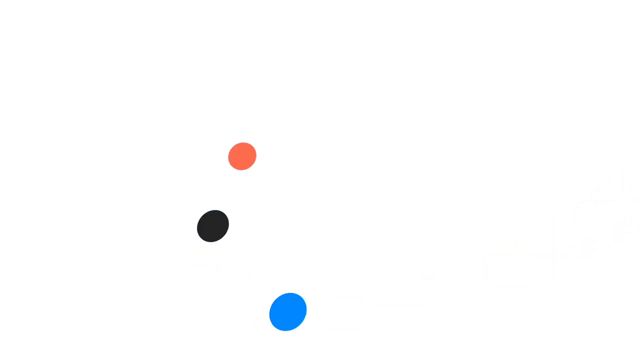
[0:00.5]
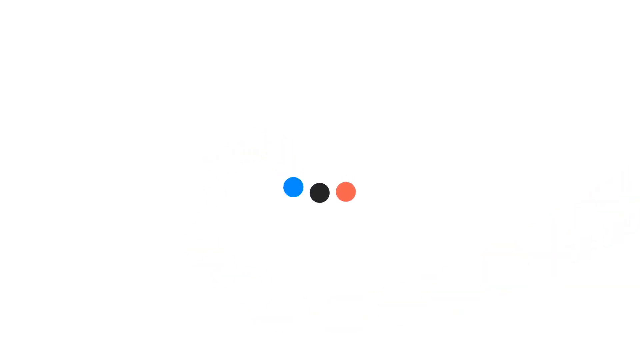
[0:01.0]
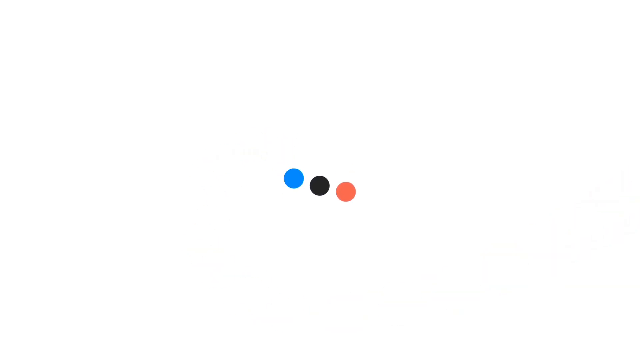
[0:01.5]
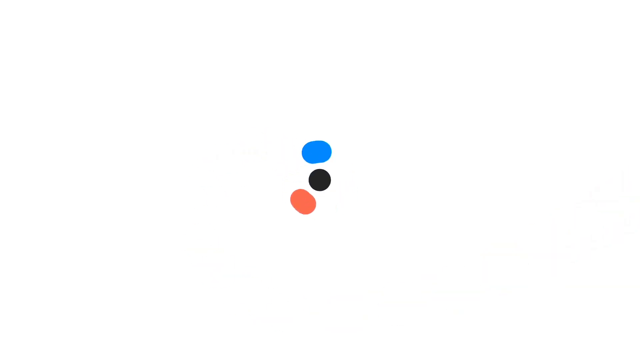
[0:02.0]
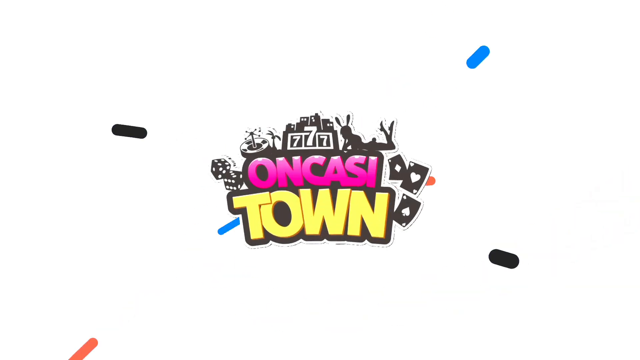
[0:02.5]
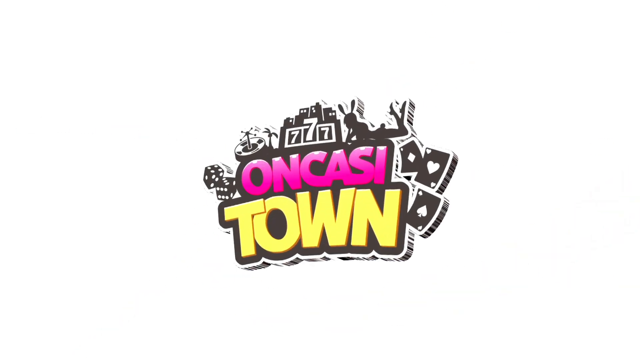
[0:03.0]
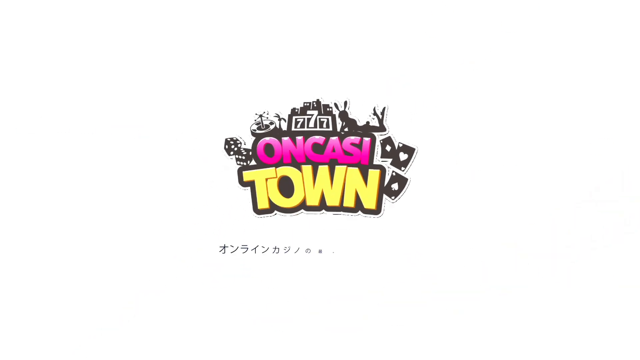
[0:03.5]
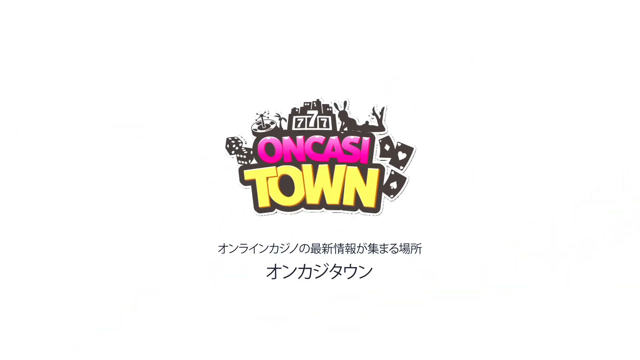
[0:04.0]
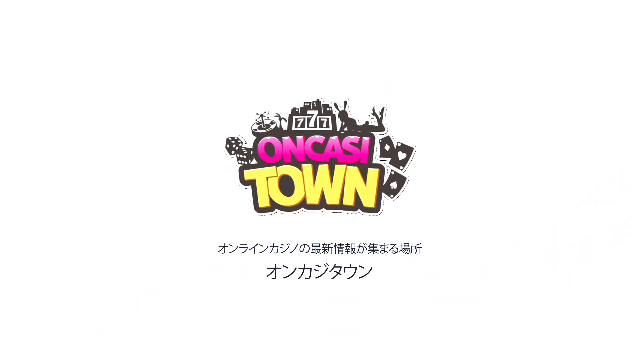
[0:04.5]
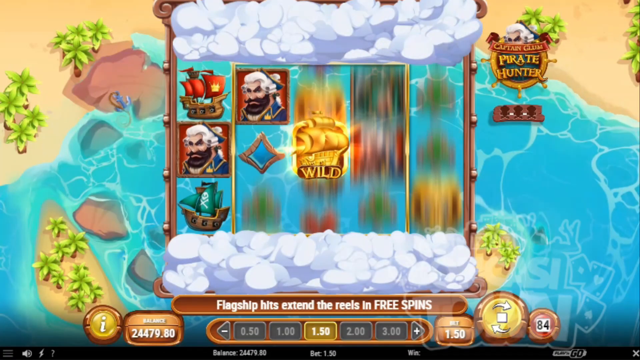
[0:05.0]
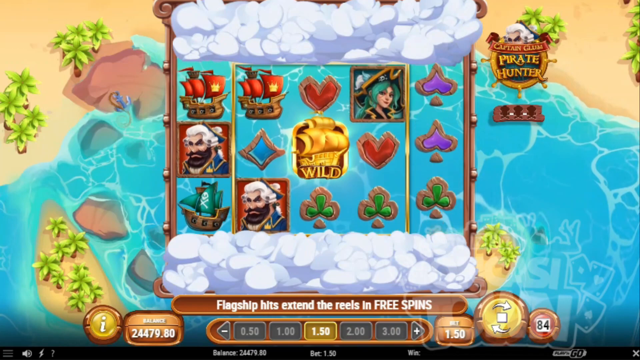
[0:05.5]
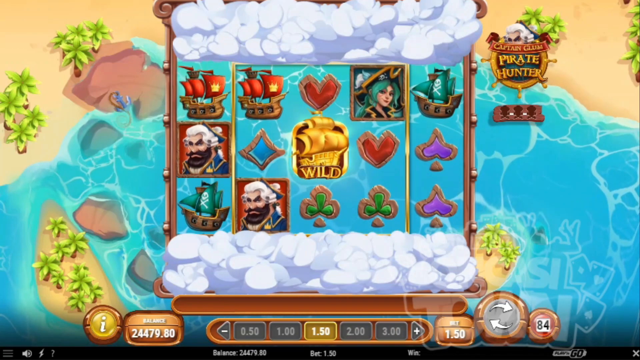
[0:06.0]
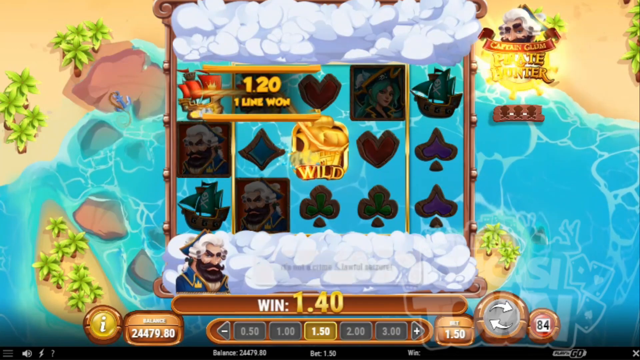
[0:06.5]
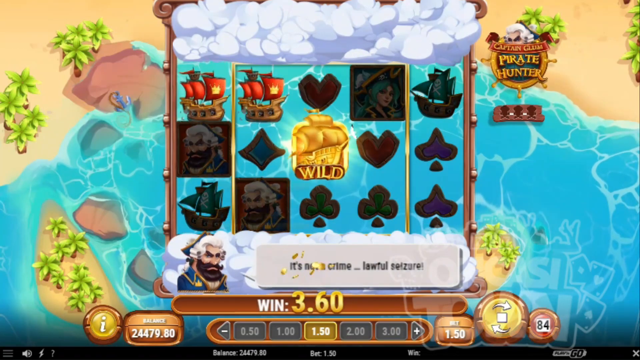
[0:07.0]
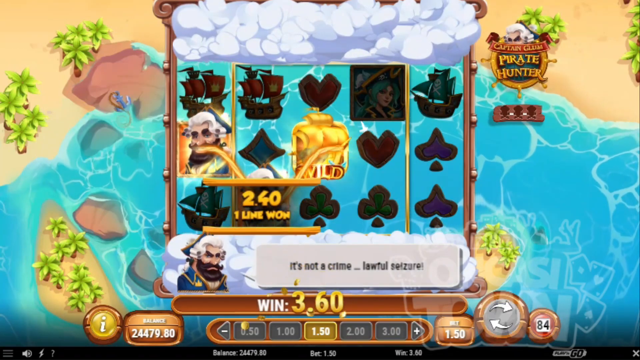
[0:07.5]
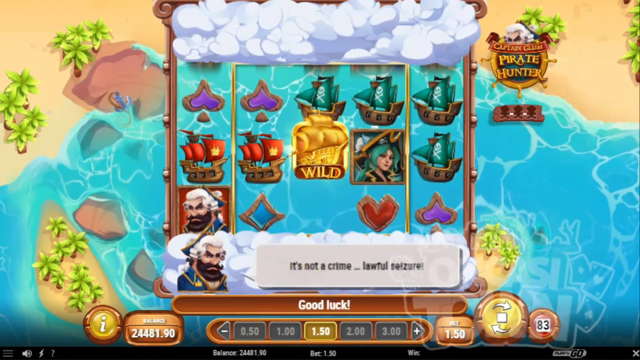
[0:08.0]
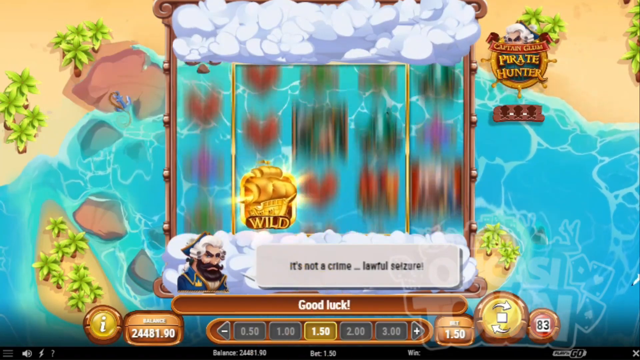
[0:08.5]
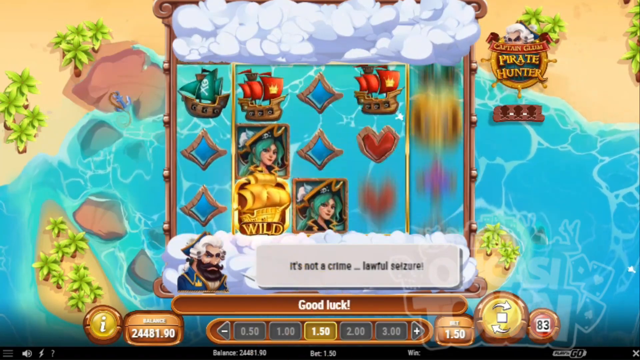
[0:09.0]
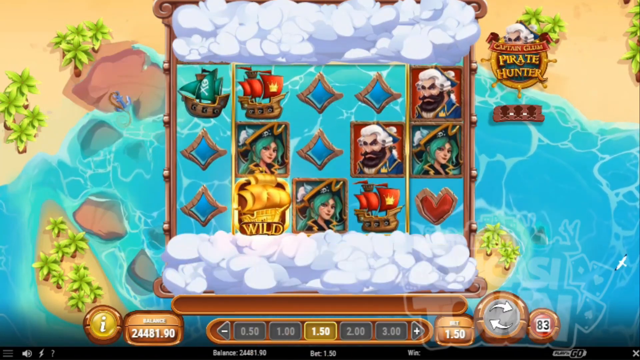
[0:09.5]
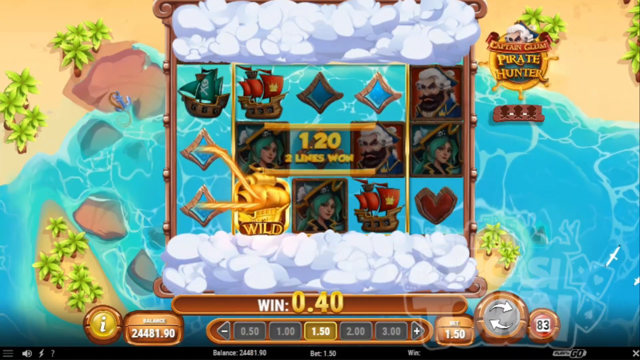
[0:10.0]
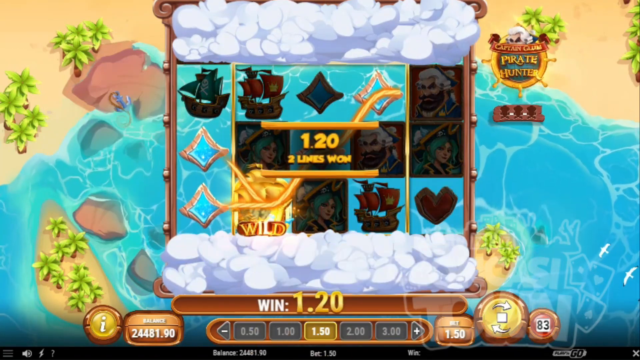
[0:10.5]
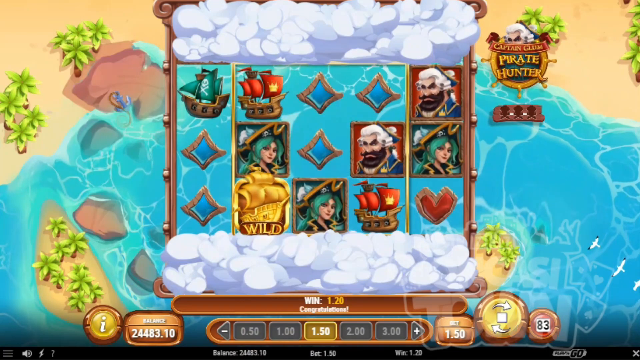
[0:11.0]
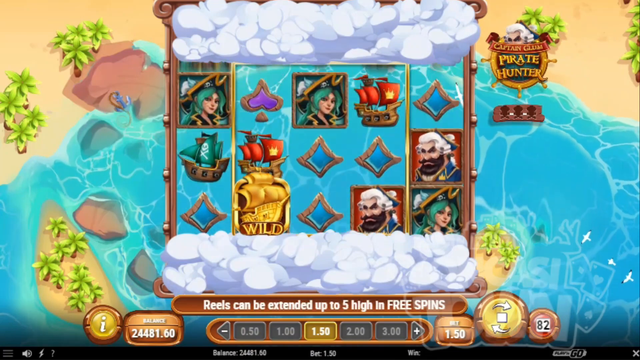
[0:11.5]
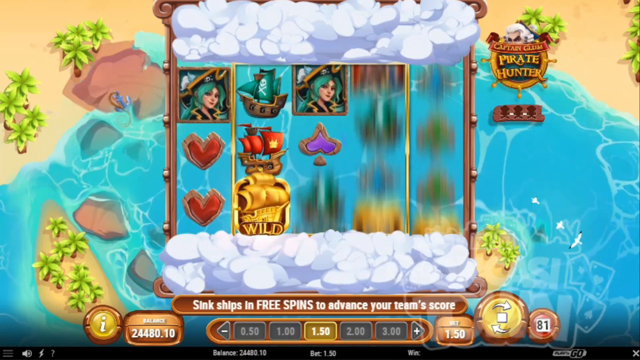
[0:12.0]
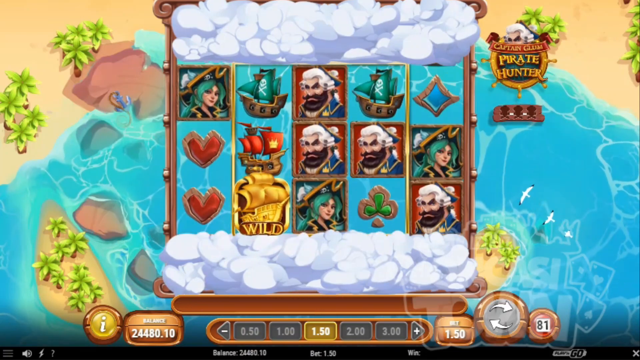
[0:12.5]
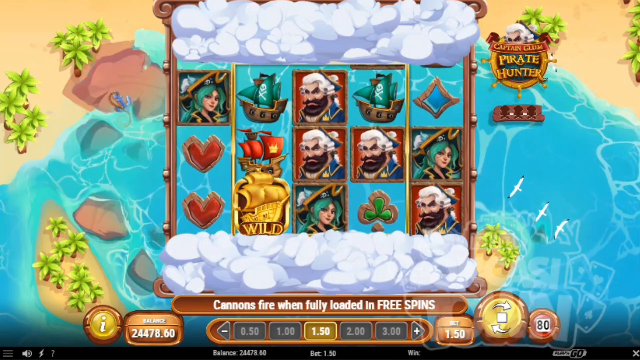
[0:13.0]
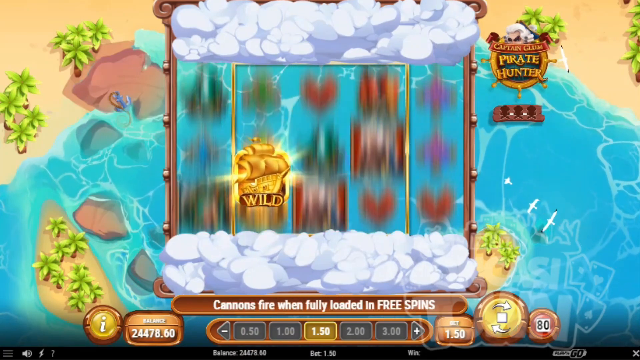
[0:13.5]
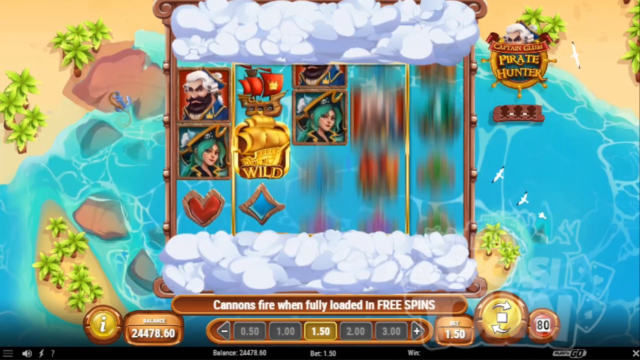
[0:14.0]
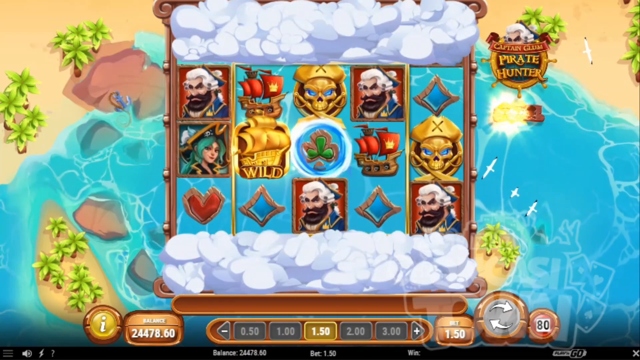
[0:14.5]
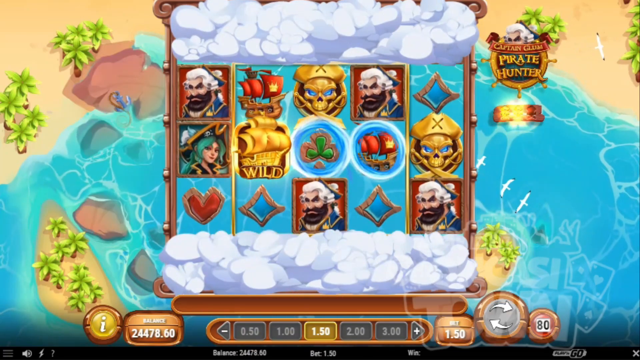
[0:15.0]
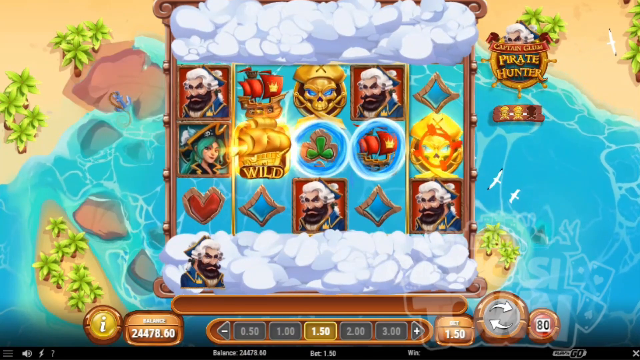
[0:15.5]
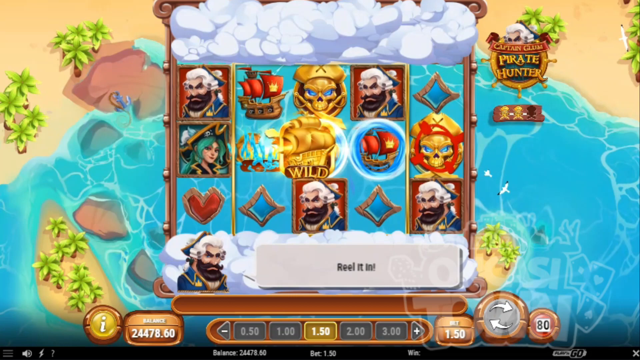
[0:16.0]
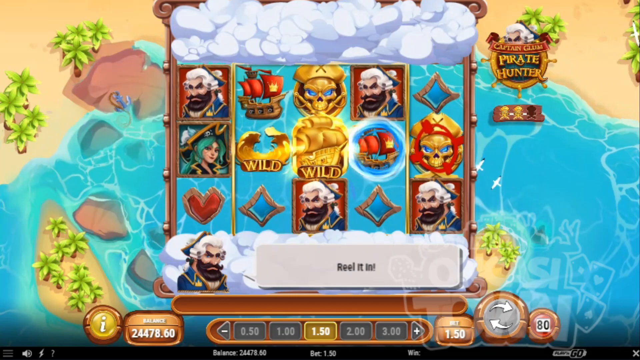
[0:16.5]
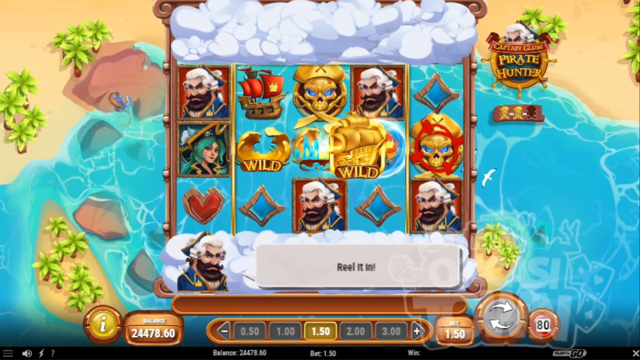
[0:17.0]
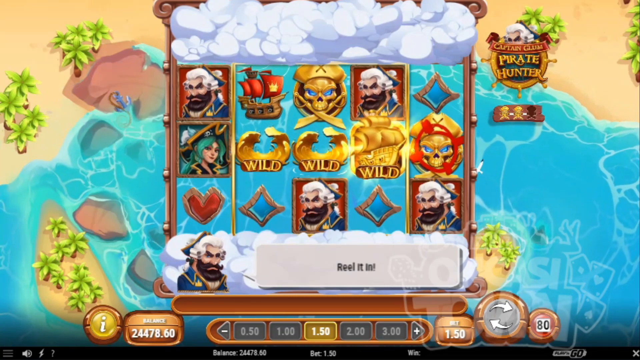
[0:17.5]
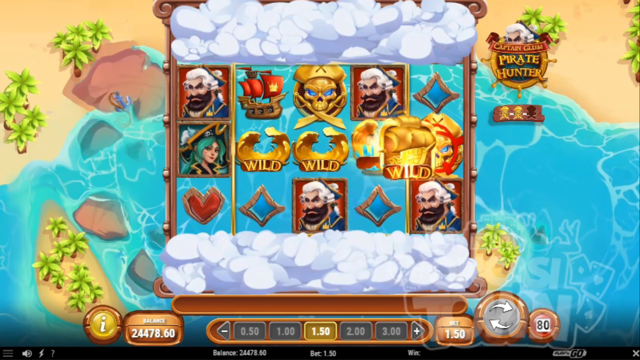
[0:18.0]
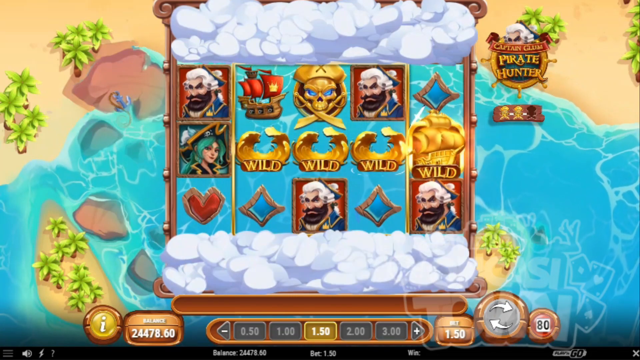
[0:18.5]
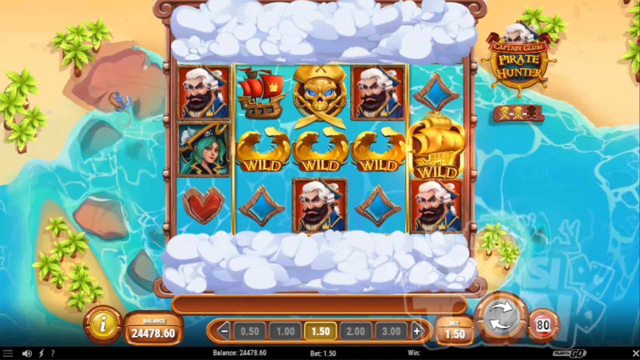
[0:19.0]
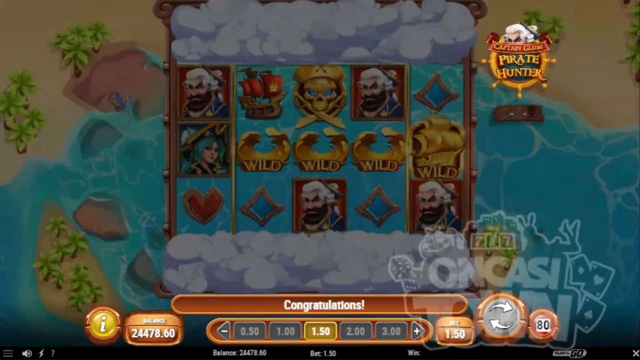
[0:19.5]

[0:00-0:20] A computer game is being played in a screen recording, in colour and landscape format. It opens on white, with blue, black and red circles animating in from the right-hand side and bringing on a logo called 777 Oncasi Town, along with some Asian writing, possibly Japanese. Next comes what looks like an old-fashioned one-armed bandit machine, with five scrolling sets of characters and figures coming down. After a few seconds it shows whether a prize has been won, and a few scores come up. There are clouds at the top and bottom of the screen, and a little logo near the top right-hand corner says "Pirate Hunter". The scene looks like an aerial view of a beach on a tropical island: the sea coming in, a sandy beach with palm trees at the top, and a few islands and rocks at the bottom of the frame. Occasionally a caption comes up with a gold galleon saying "Wild", and there is the odd sort of skull-and-crossbones symbol. The wild gets four in a row, giving a big win right at the end.